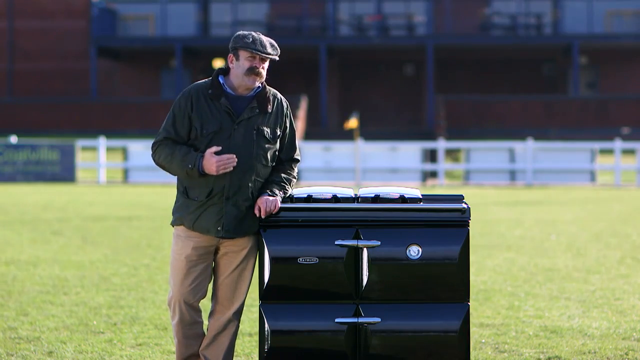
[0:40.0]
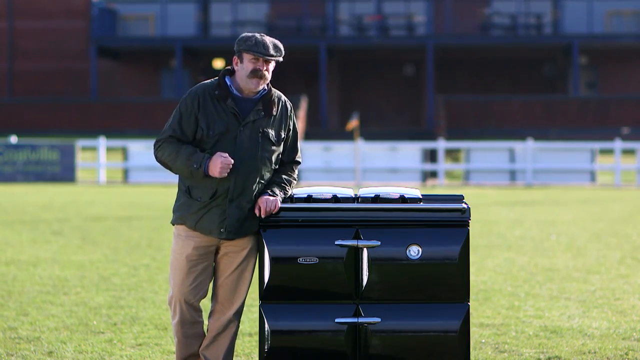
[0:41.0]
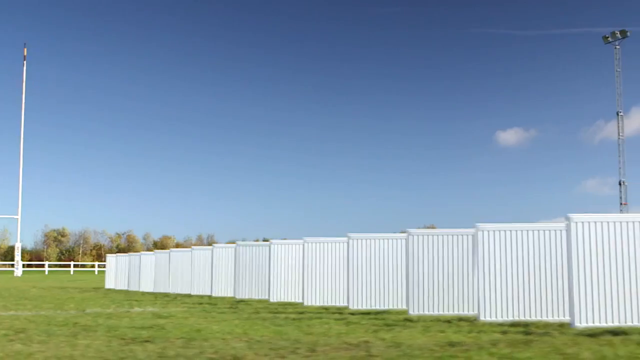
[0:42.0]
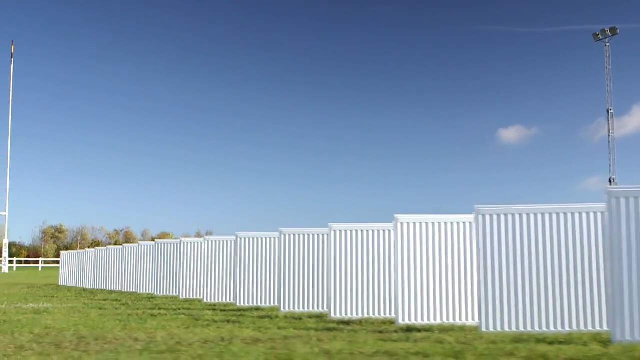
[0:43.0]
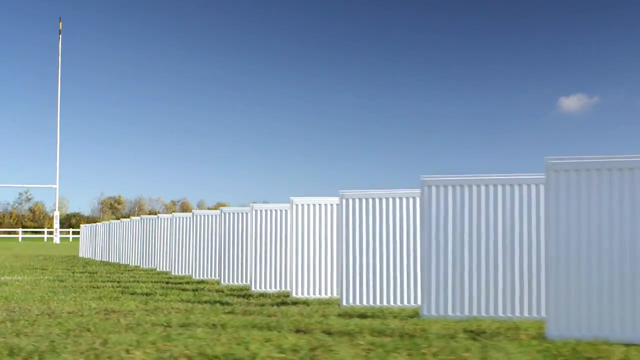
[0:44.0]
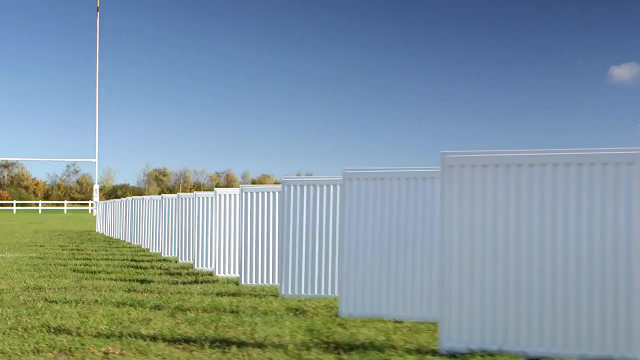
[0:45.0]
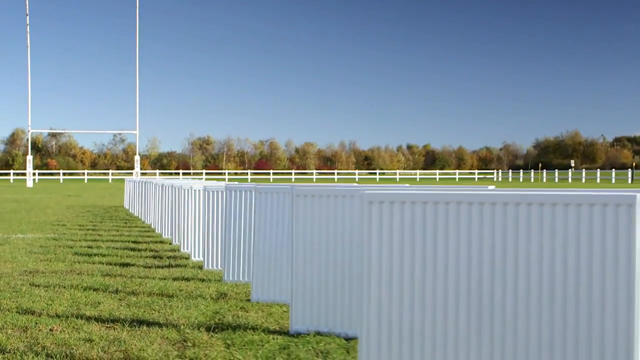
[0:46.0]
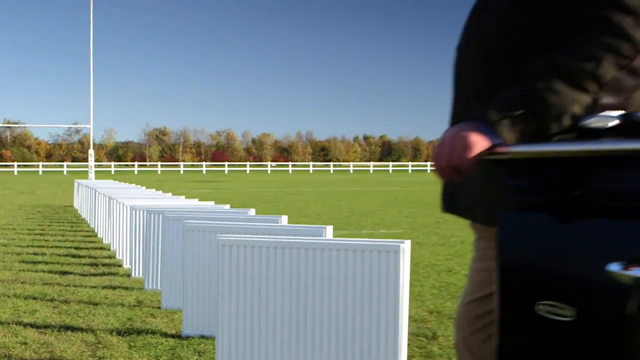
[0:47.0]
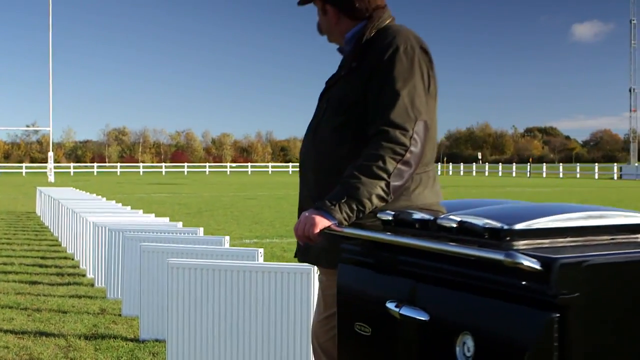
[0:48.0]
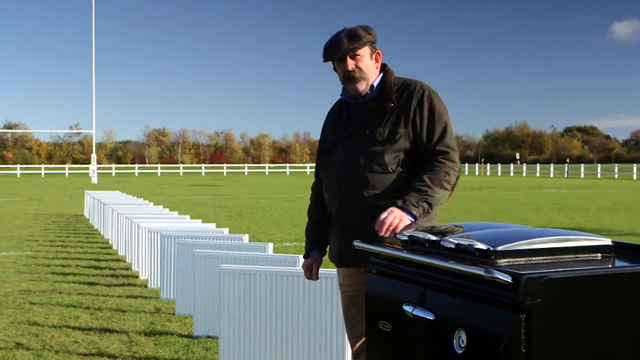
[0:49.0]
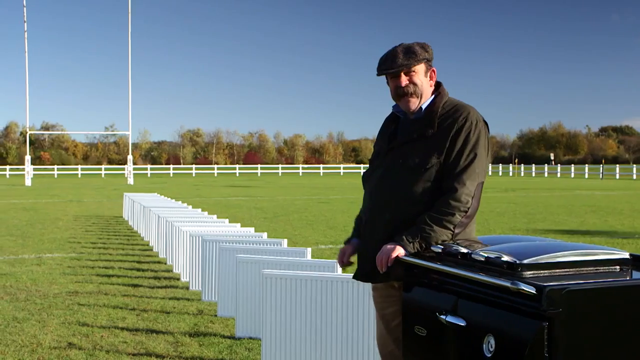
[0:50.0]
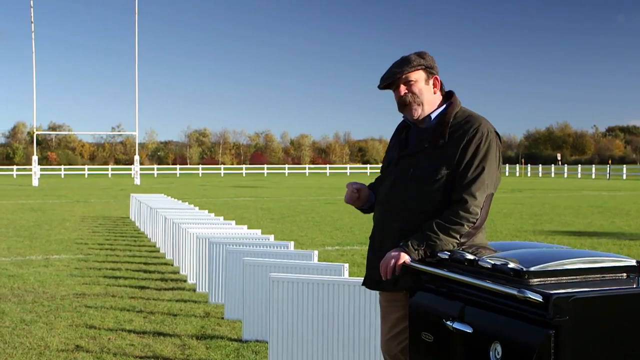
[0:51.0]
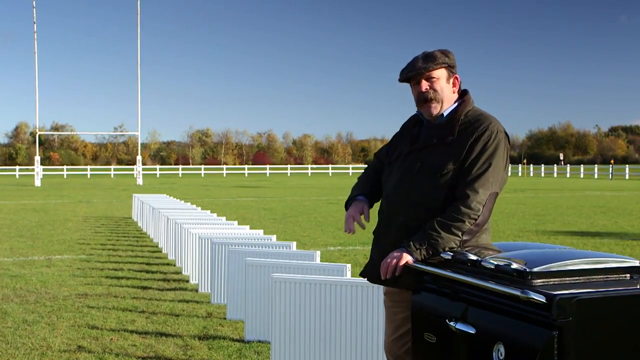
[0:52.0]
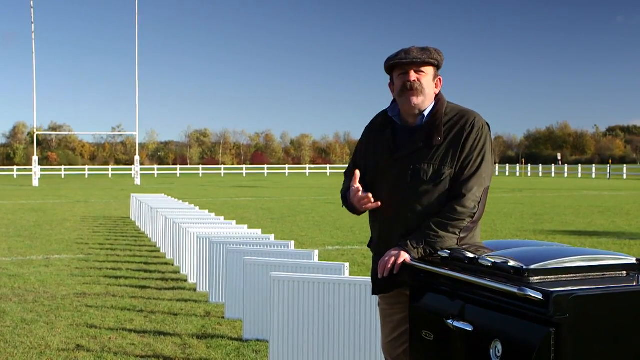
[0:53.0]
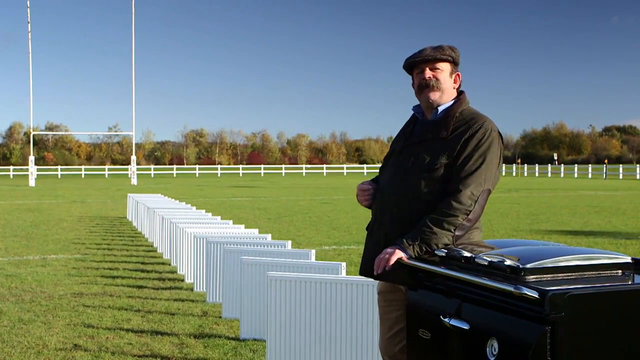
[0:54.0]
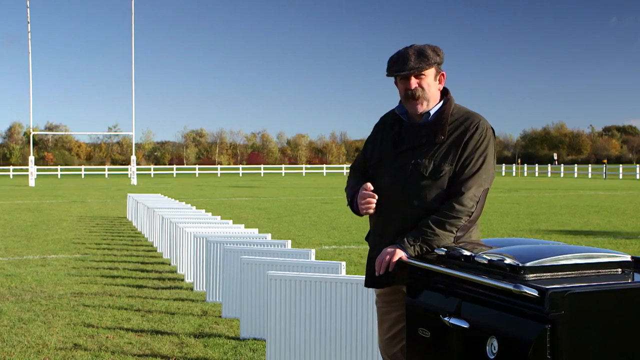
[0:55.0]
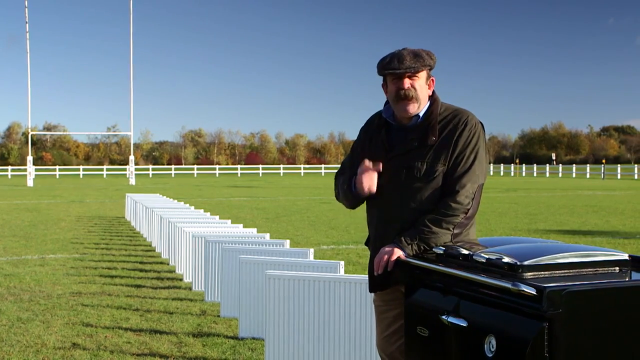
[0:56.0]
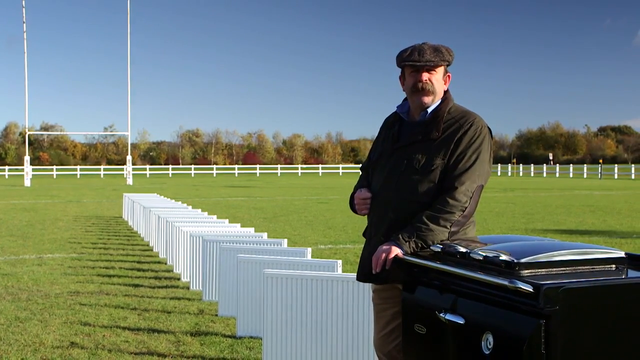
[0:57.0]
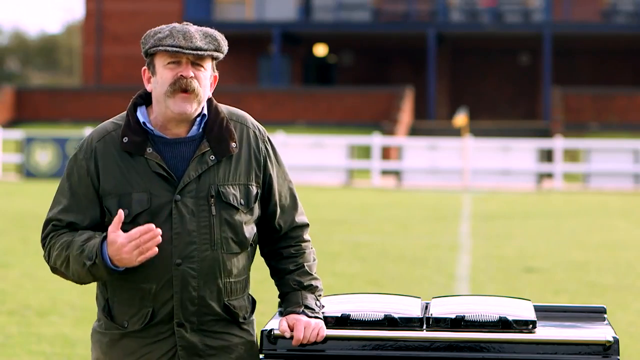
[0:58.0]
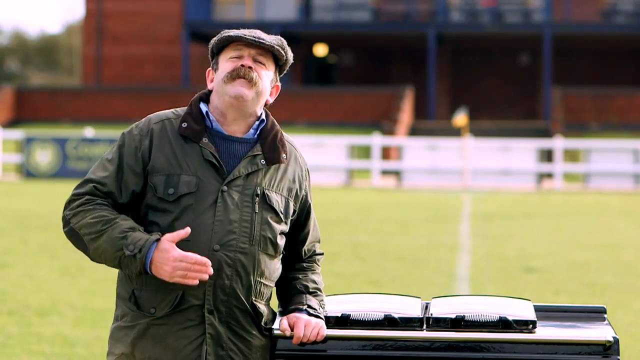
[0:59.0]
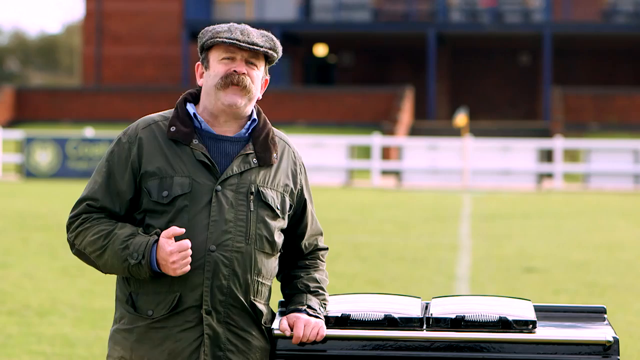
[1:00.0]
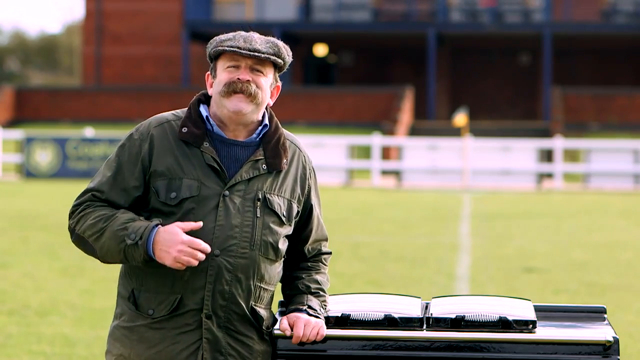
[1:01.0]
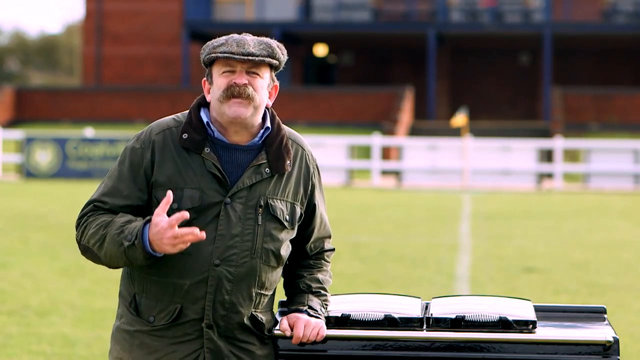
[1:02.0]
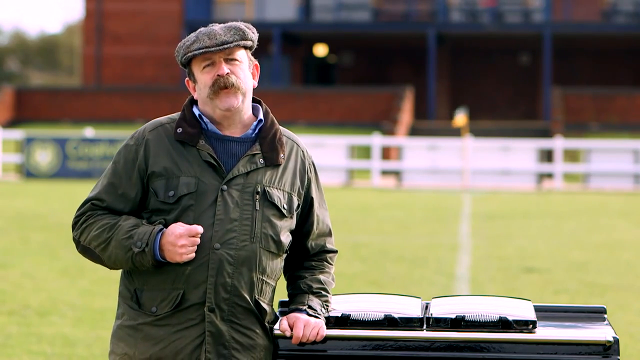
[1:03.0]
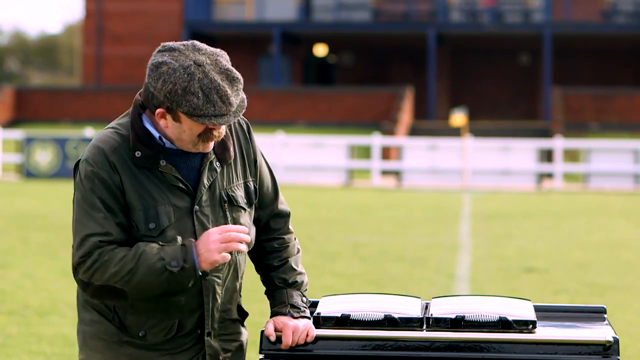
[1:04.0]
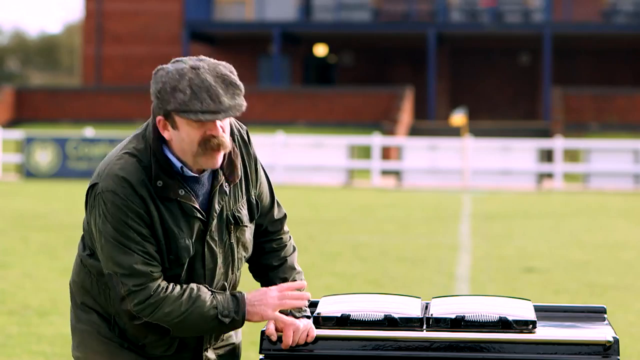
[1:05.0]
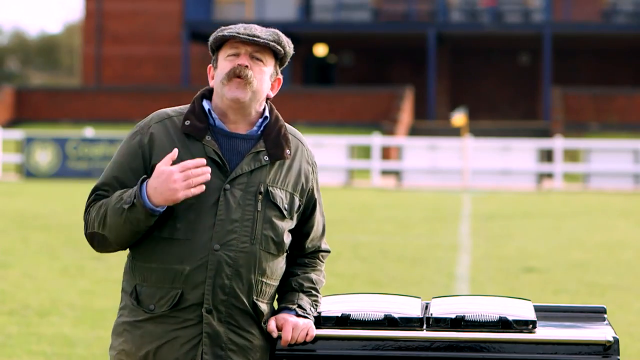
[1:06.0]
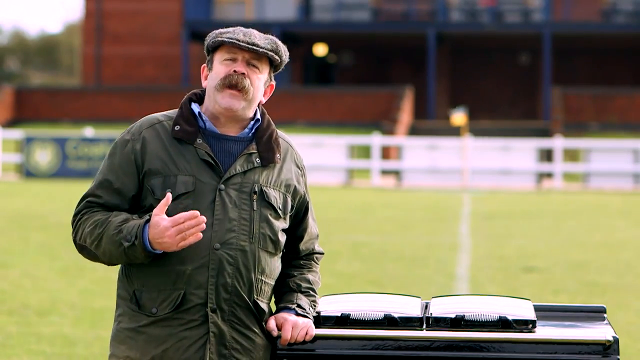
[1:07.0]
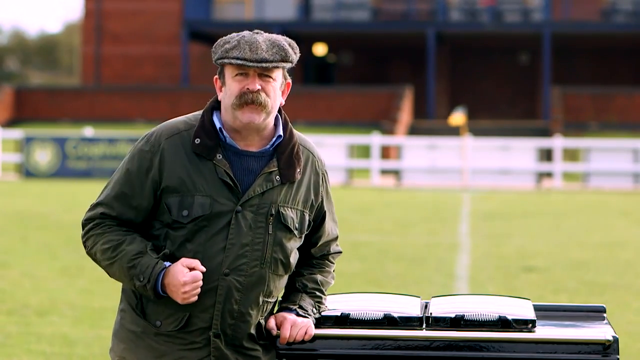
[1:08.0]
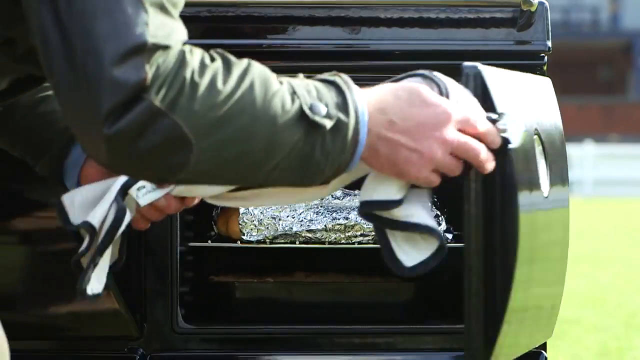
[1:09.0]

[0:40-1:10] The man keeps talking while looking at the camera, his right arm bent at a 90-degree angle and his hand slightly moving up and down as he speaks. He leans on the metal square contraption, which is about waist high on him. He looks to his left, and the view changes to a shot looking down the rugby field, with what may be goalposts in the background and white fencing toward the right. The camera zooms back so more and more comes into view, and the shot is kind of slightly elevated. The same man comes into view from the right side of the screen, again right next to the metal square device; he looks down at the field and then back at the camera. From another angle he looks straight at the camera from the left-hand side of the screen, again using his right hand for emphasis, leaning in slightly as he speaks and then leaning back. He looks down at the metal device almost as if to show it, then looks back at the camera. The front doors of the device are briefly seen open, with what looks like potatoes inside.